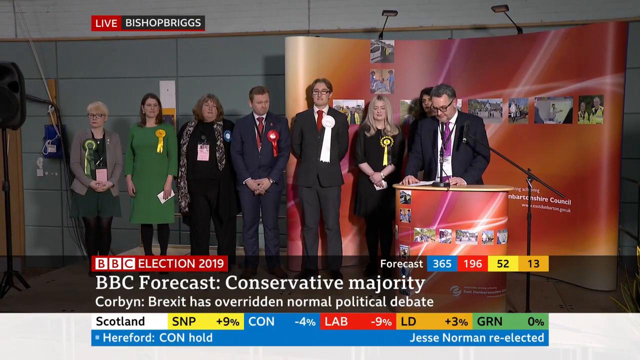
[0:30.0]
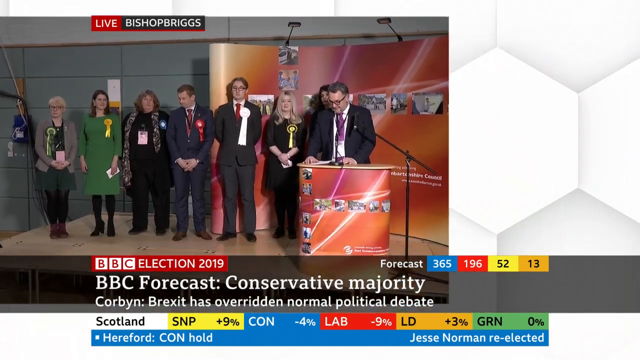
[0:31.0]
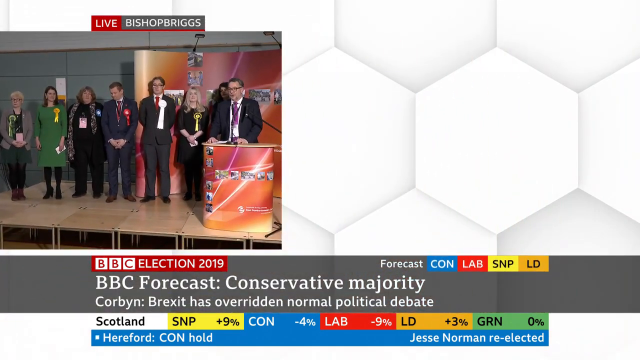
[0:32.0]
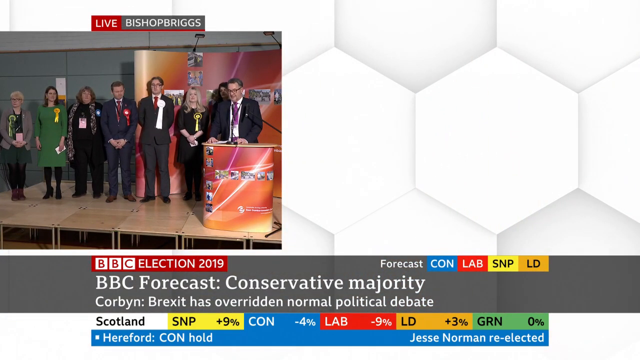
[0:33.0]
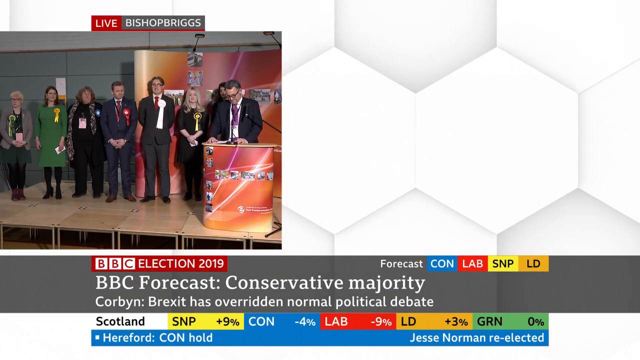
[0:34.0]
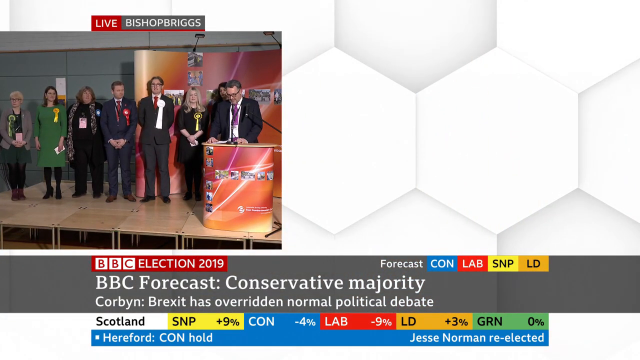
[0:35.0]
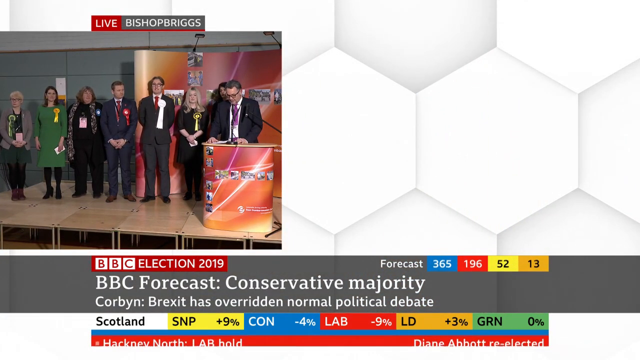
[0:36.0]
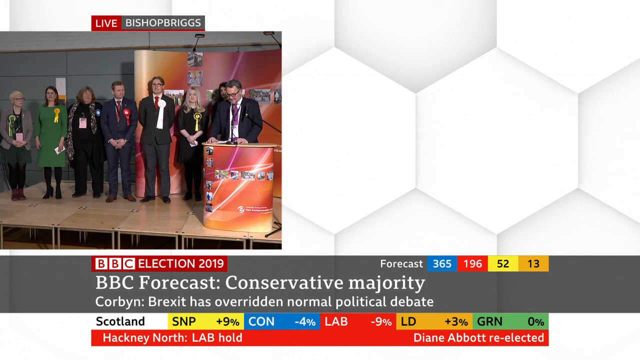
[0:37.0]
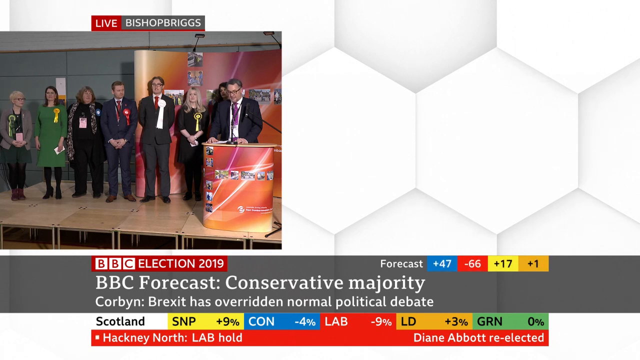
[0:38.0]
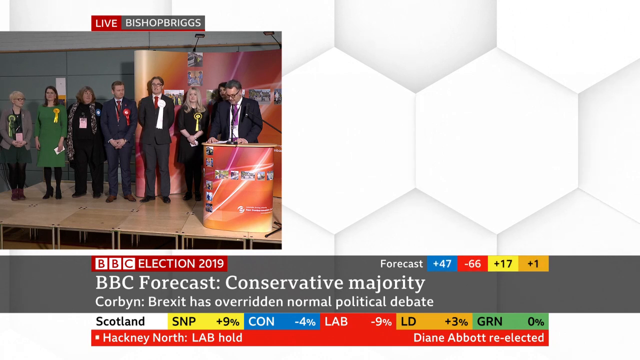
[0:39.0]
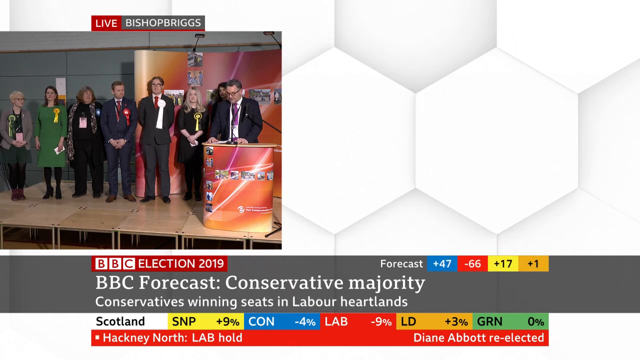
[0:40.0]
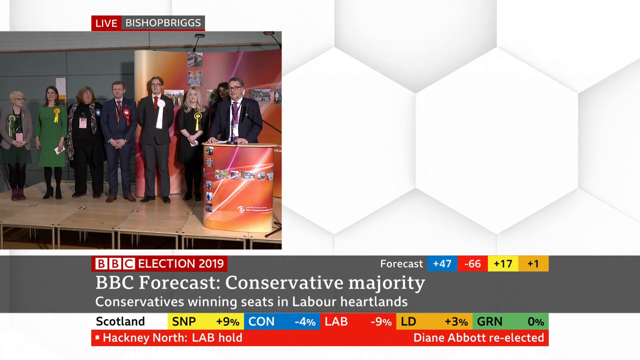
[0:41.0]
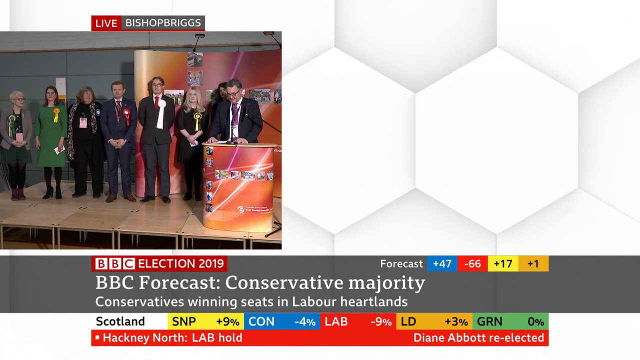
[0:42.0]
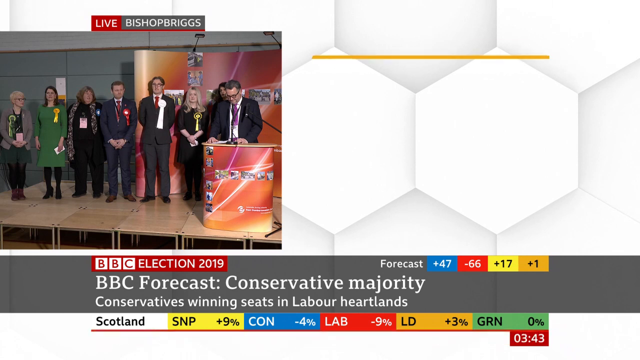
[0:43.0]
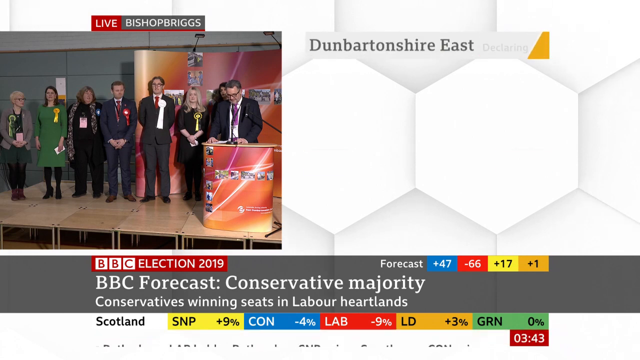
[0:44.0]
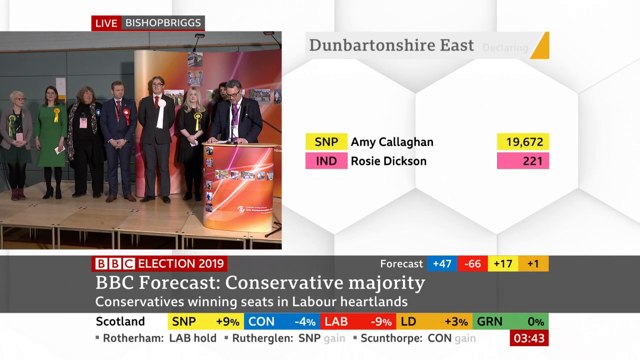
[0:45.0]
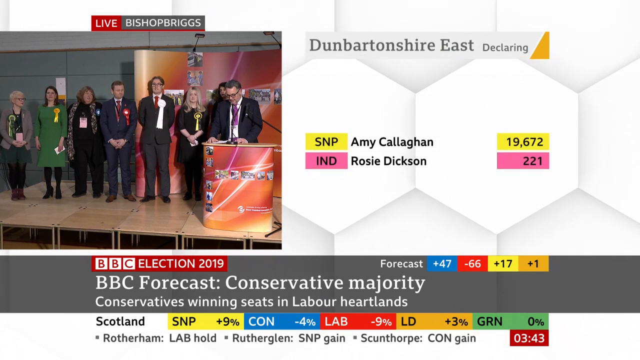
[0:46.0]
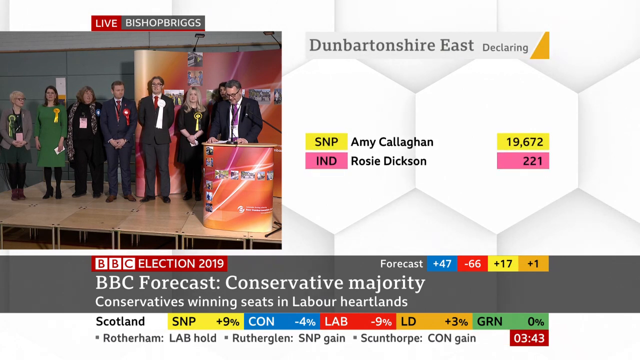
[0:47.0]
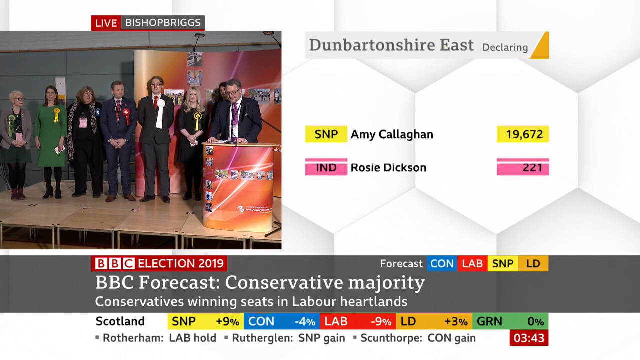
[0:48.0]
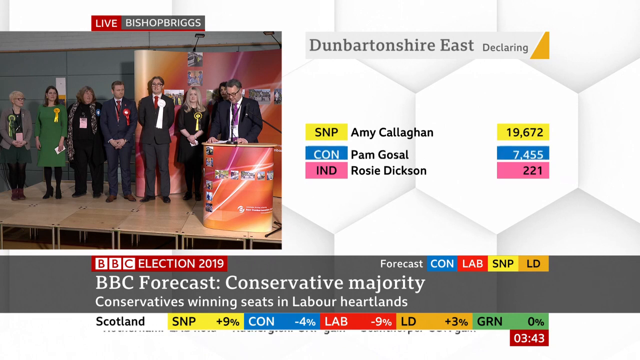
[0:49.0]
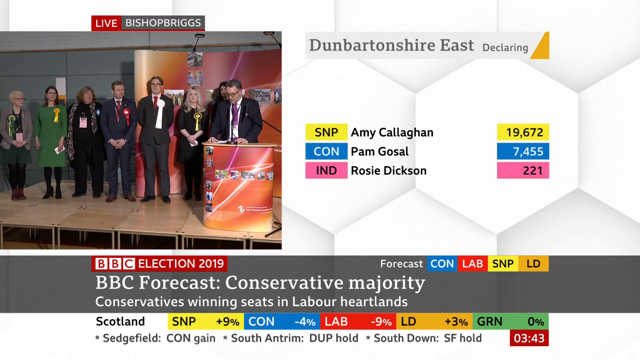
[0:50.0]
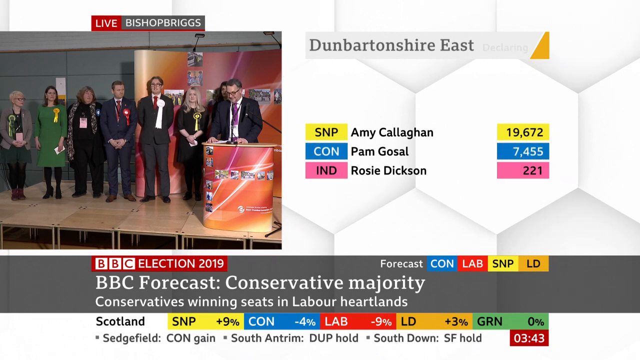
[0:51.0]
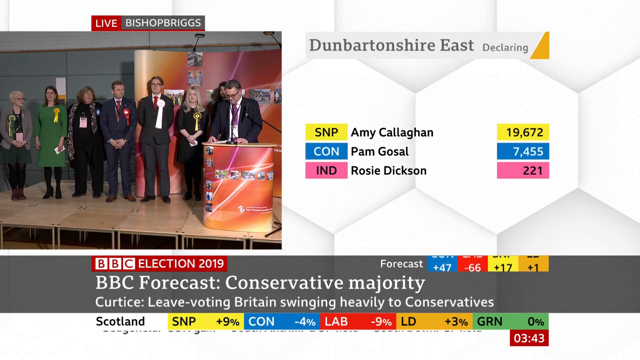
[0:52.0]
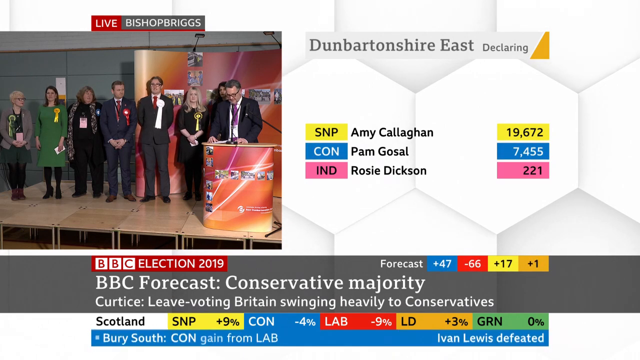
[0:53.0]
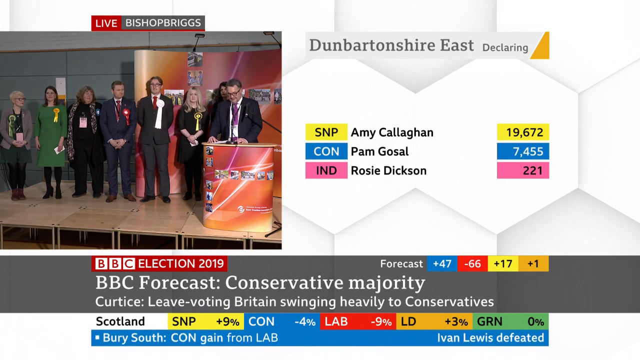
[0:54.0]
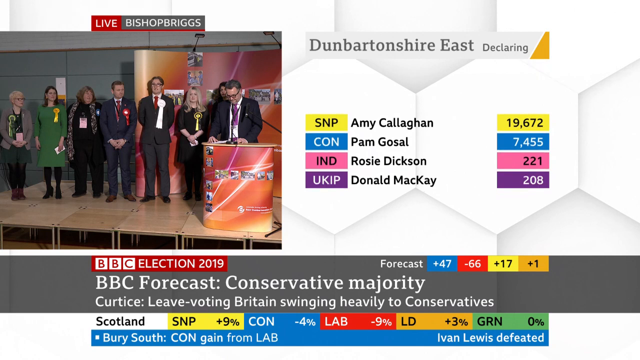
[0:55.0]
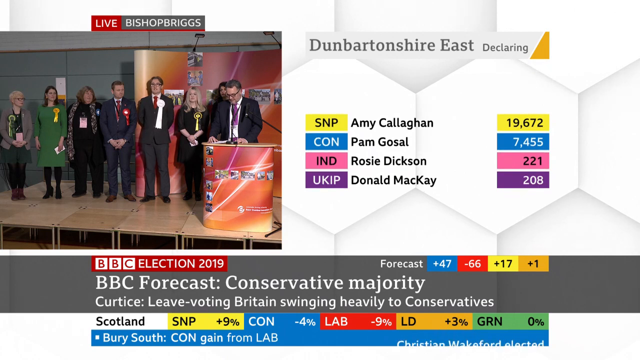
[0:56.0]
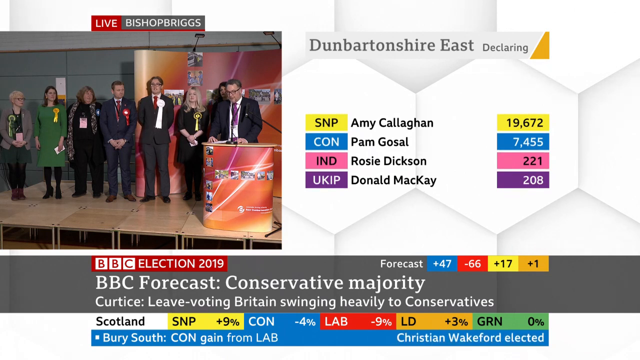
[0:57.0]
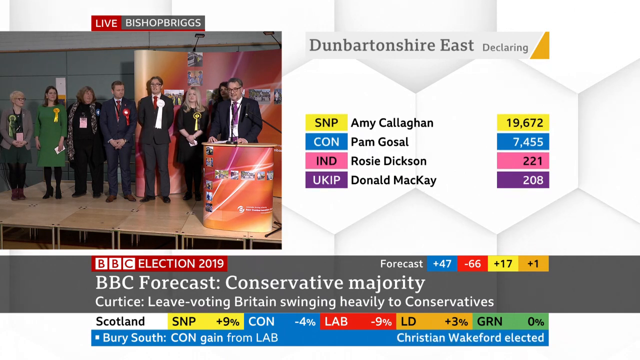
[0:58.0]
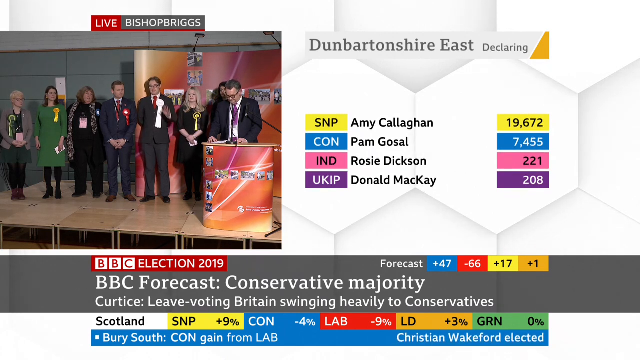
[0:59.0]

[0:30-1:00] The image of the people on the stage shrinks to take up only half the screen and moves to the left. The other half shows a somewhat generic hexagonal, honeycomb-like background in black and gray or gray and white. At the top it reads "Dunbartonshire East Declaring." Below that, a yellow box reads "SNP" with the name "Amy Callahan" in yellow and "19,672" to the right. Underneath, a pink box holds the letters "ID" with the name "Rosie Dixon" and the number "221" to the right. A blue box then pops up between them reading "CON", with the name "Pam Gosal" and "7455" to the right. A purple box at the bottom shows "UKIP", the name "Donald McKay" and the number "208" to the right.